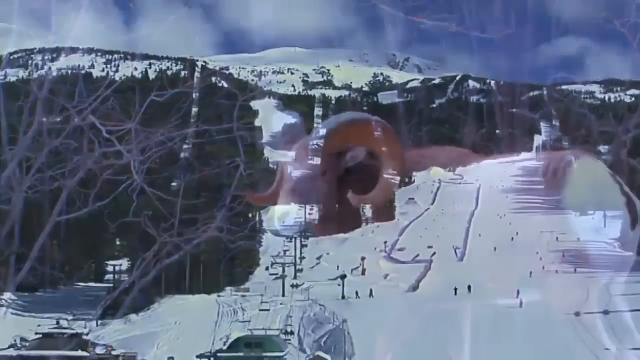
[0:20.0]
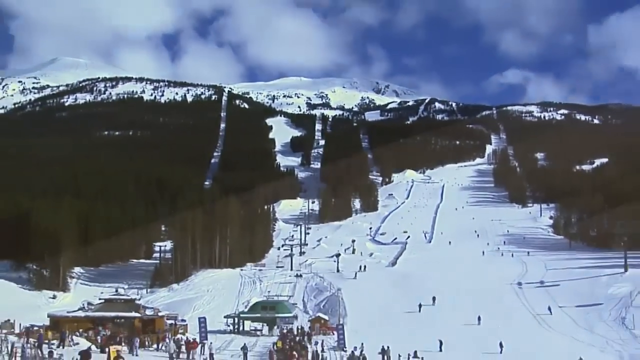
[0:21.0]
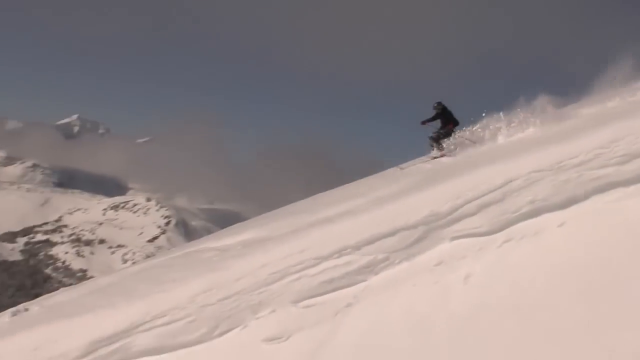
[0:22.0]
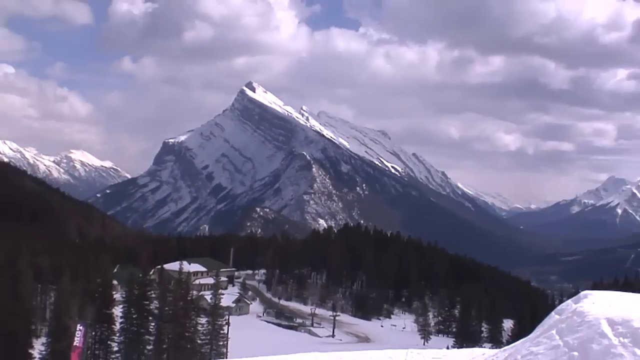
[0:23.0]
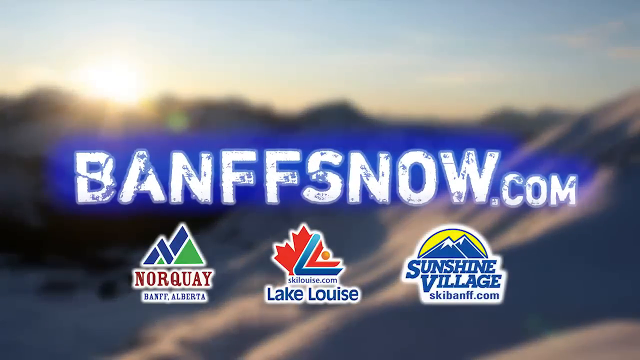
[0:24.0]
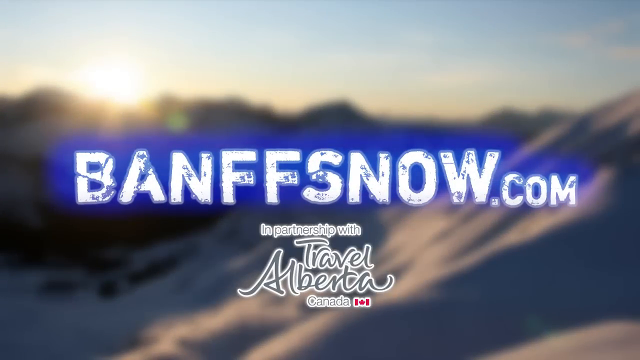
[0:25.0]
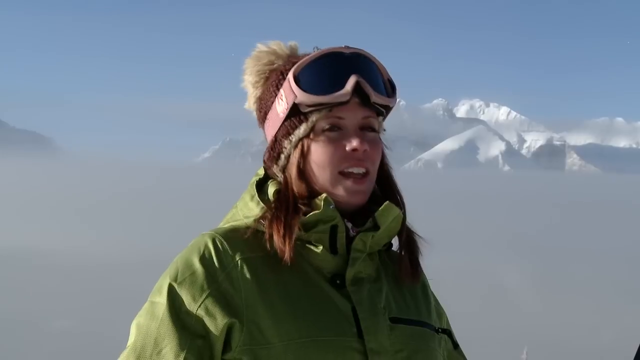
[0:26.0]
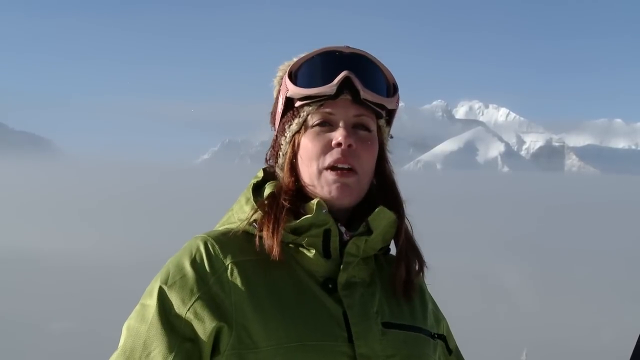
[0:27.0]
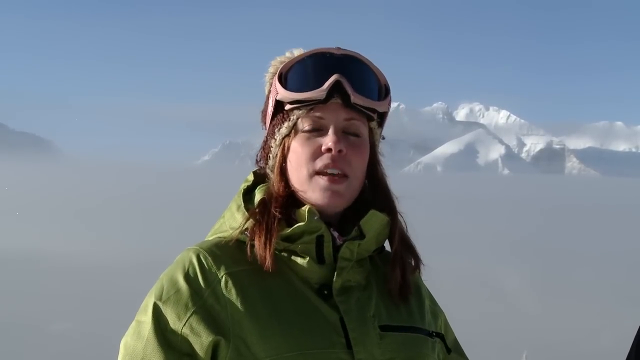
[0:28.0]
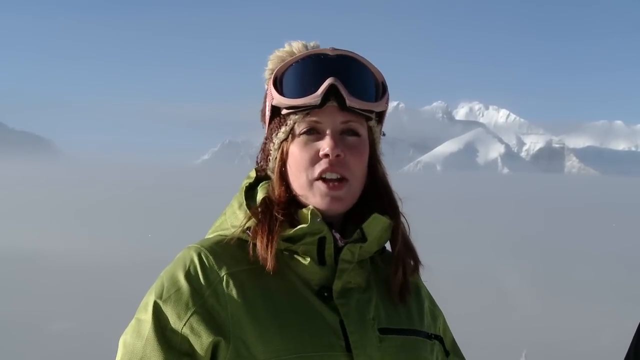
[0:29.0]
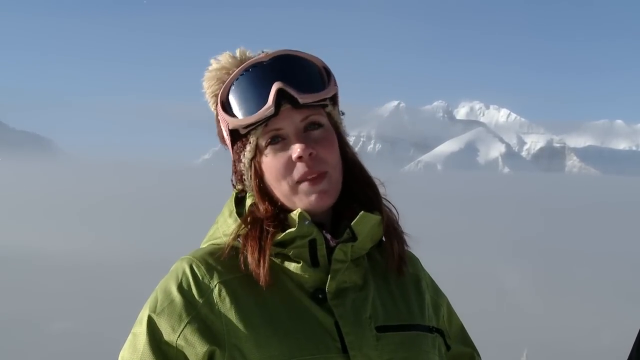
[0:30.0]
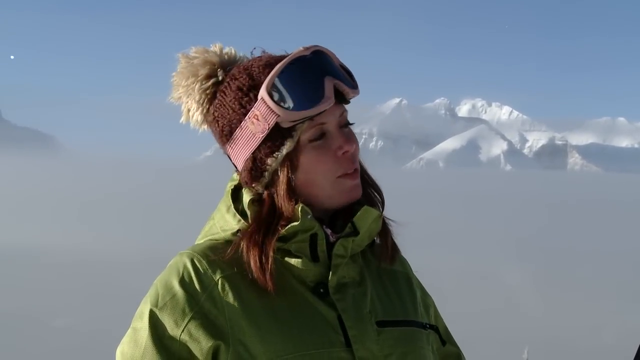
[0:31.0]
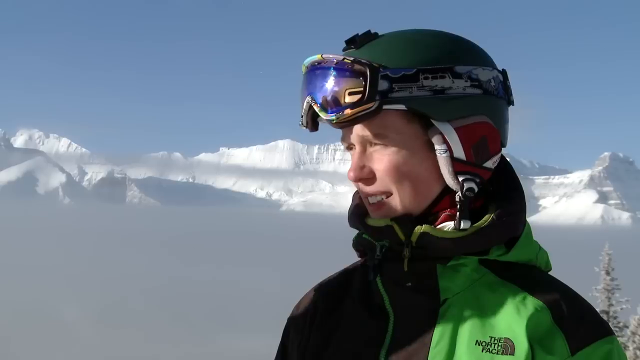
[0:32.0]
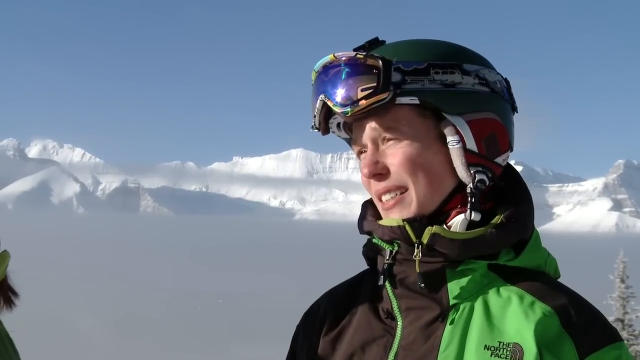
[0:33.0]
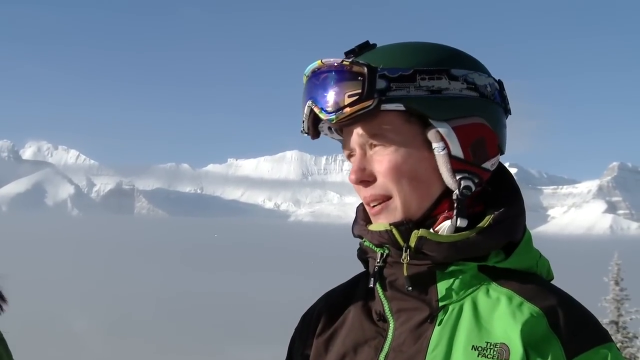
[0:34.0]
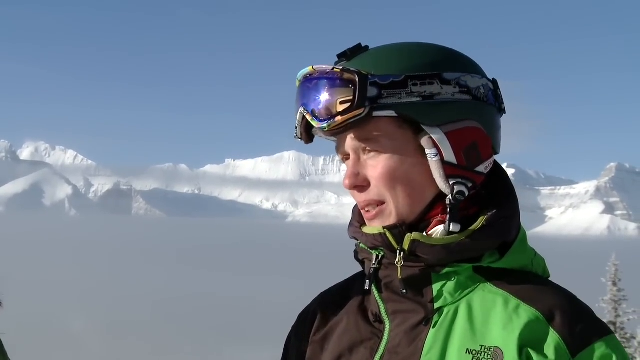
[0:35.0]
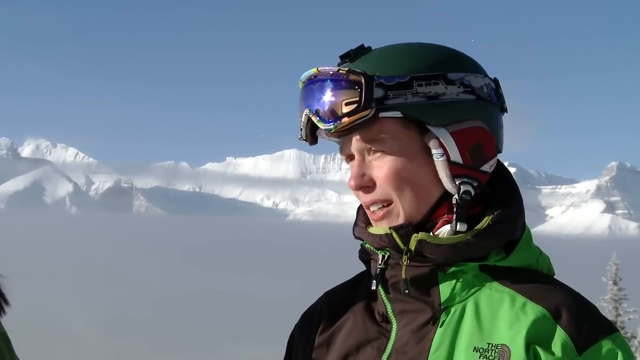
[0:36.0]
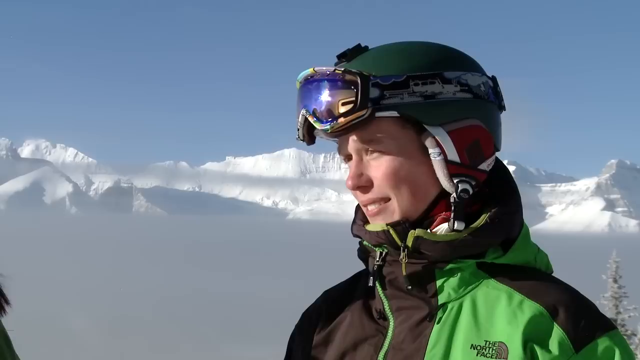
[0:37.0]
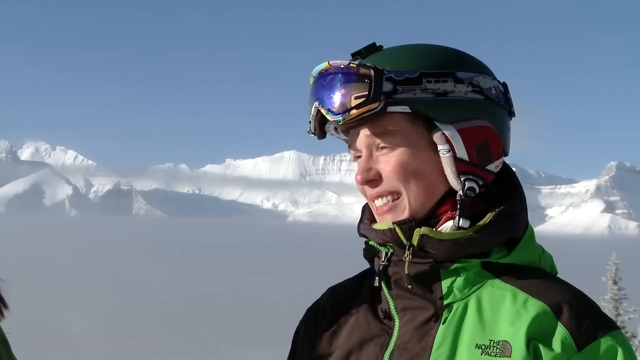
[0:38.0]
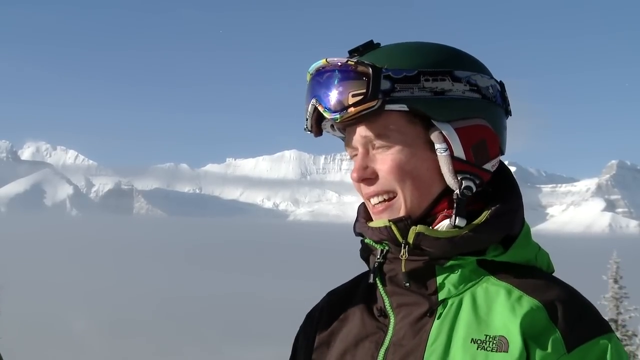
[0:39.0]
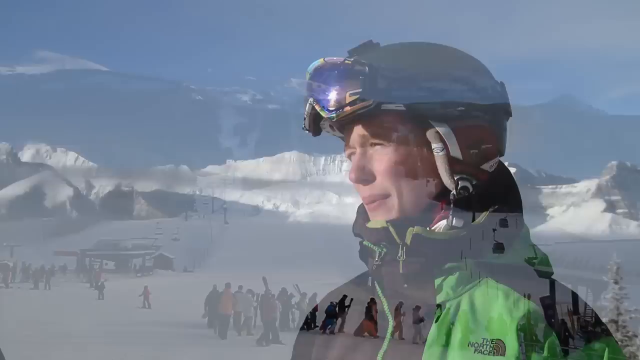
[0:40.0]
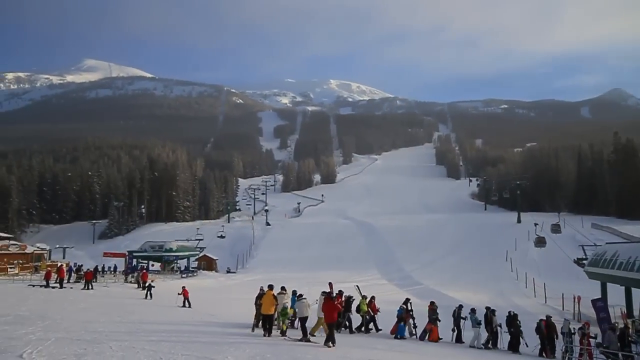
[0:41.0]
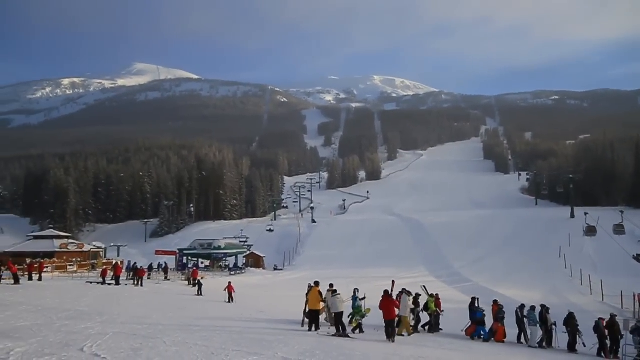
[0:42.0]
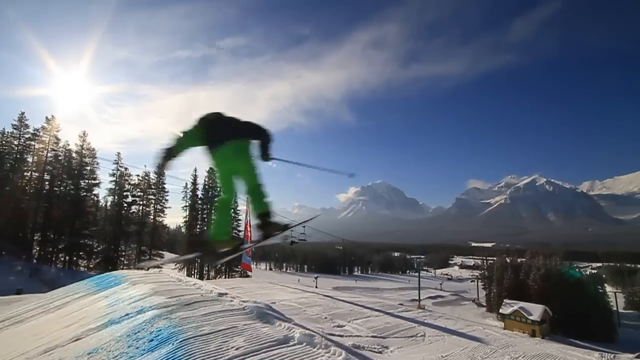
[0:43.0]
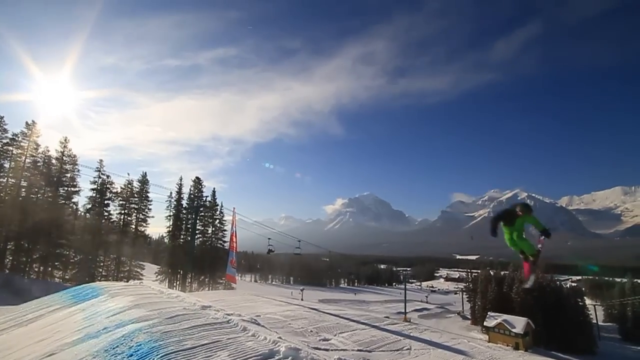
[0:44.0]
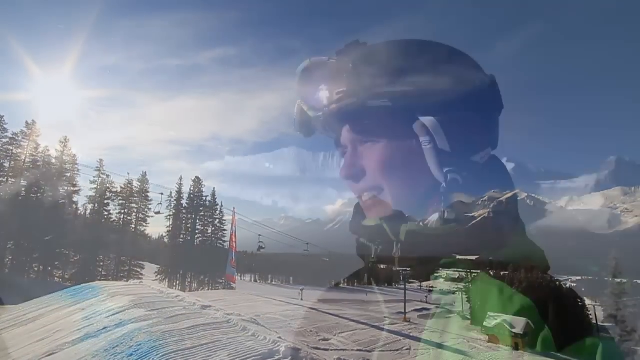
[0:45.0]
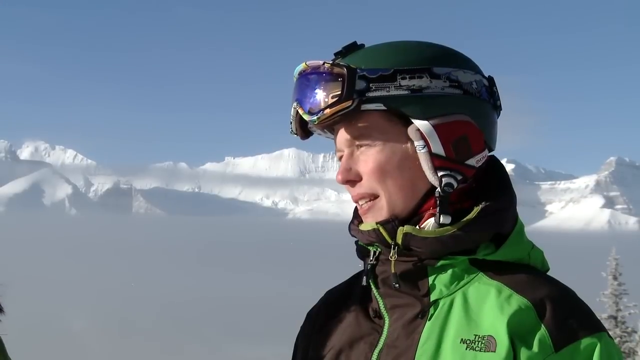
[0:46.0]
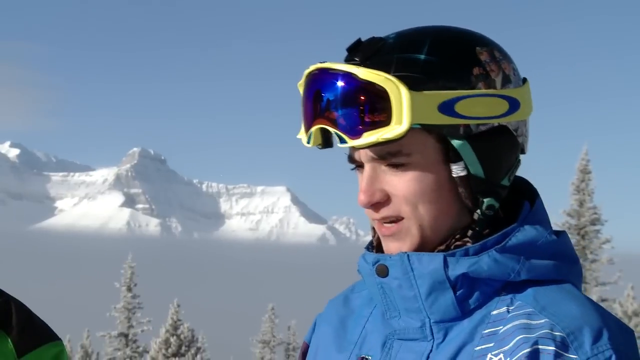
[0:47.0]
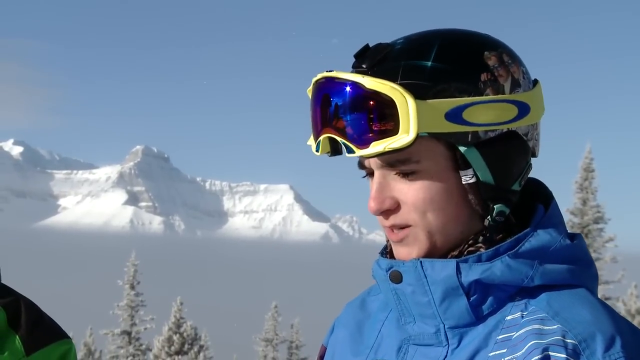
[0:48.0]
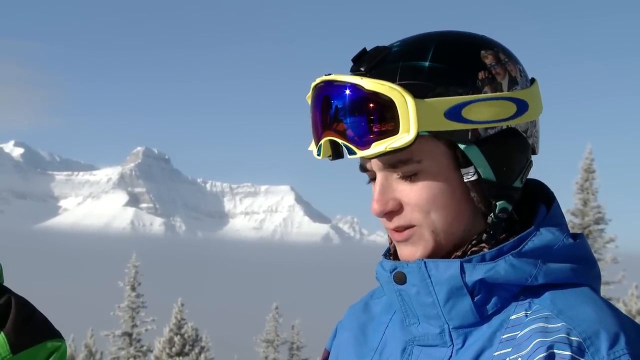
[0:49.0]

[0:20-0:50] A transition scene seems to show a barely visible part of the goat, then ski runs in the background with evergreen pine trees around the ski lifts and a big open area on the right where the trees have been cut down and cleared for skiing. A person skis down a run from right to left. Next comes a big mountain in the background with a small ski house or resort building on the left, surrounded by evergreen trees. The text "banffsnow.com" appears, followed by Banff Alberta, Lake Louise and Sunshine Village logos, apparently for different ski resorts, and then "in partnership with" someone else, which goes by quickly. The woman in the green jacket with the white snow goggles returns, talking directly into the camera with a mountain range behind her. She then talks to one of the kids, who is more to the right and squints heavily because of glare. A shot of the ski area shows someone skiing off a little hill, and then the video cuts back to the kid in blue on the right-hand side, looking toward the left.